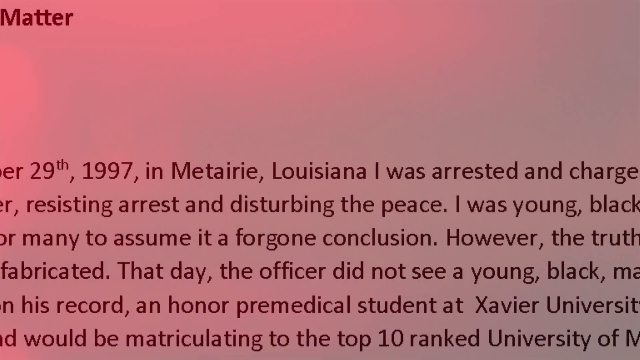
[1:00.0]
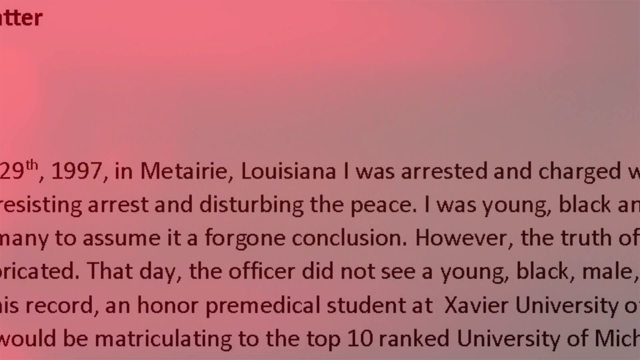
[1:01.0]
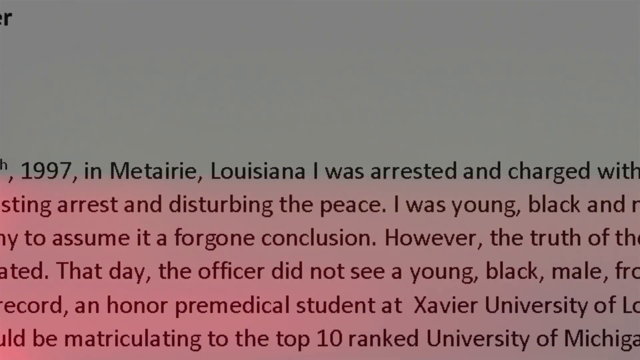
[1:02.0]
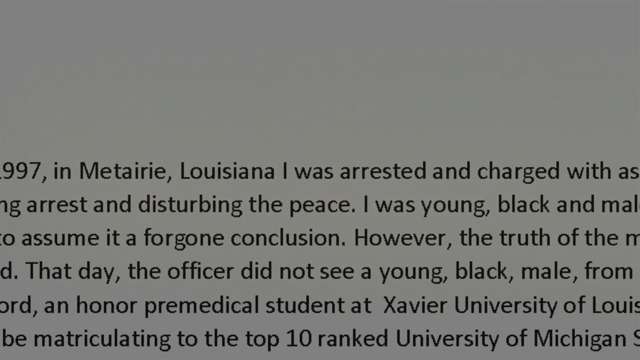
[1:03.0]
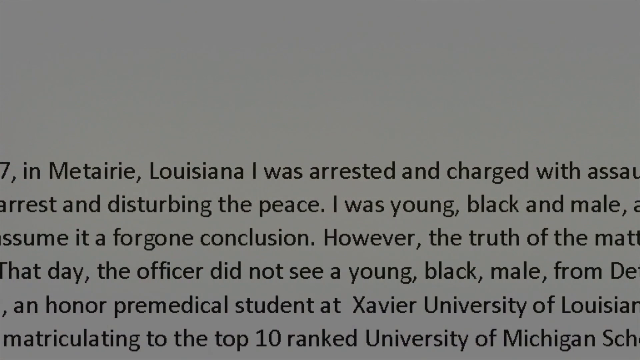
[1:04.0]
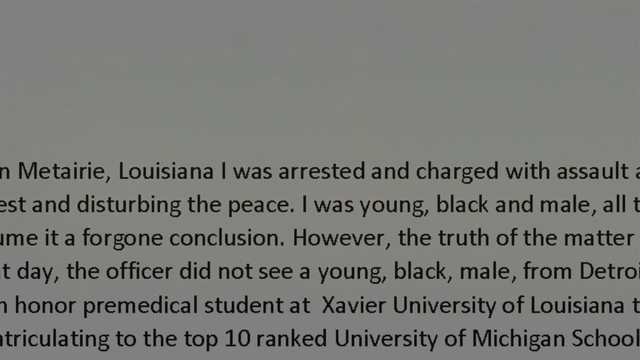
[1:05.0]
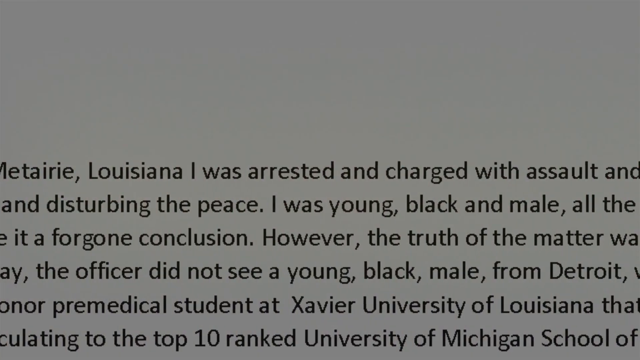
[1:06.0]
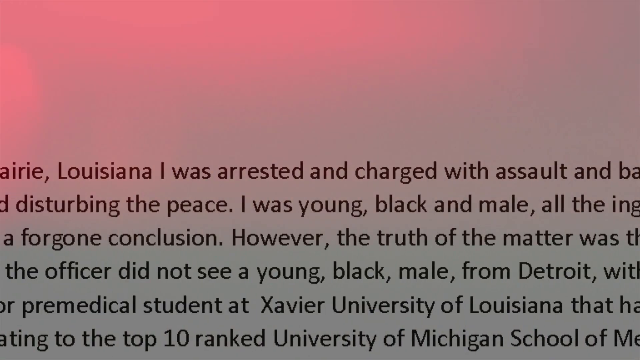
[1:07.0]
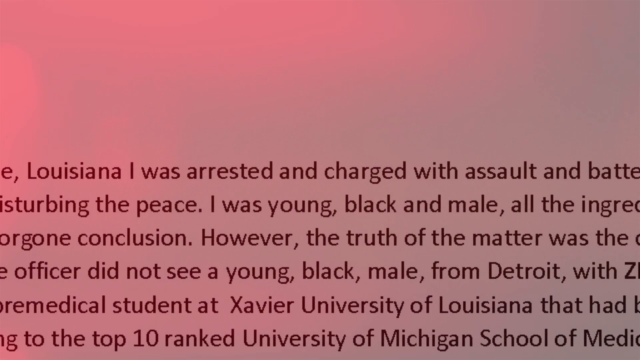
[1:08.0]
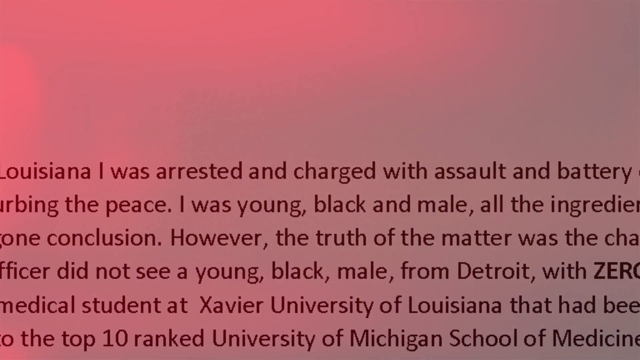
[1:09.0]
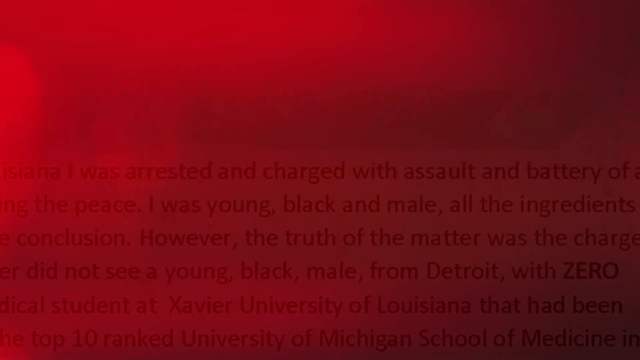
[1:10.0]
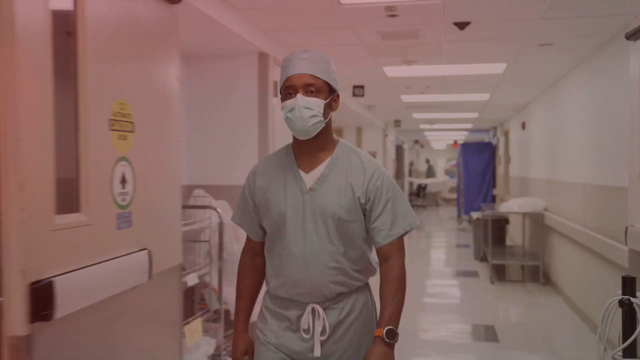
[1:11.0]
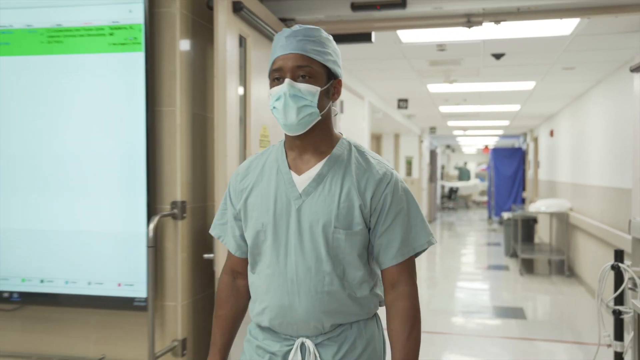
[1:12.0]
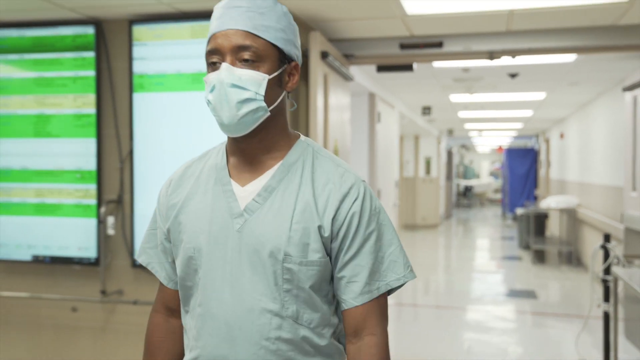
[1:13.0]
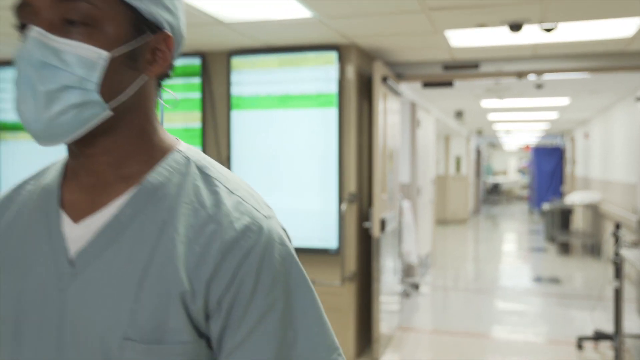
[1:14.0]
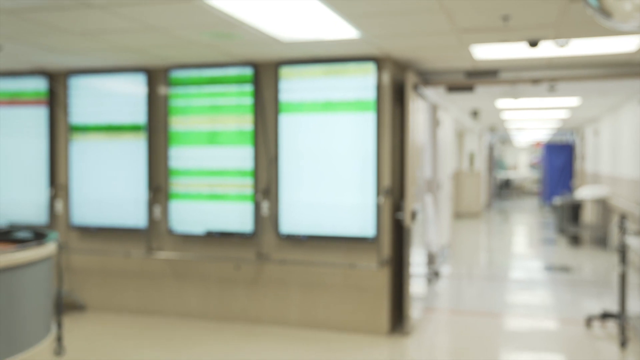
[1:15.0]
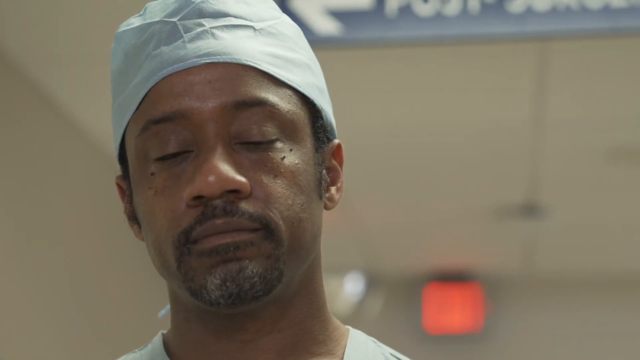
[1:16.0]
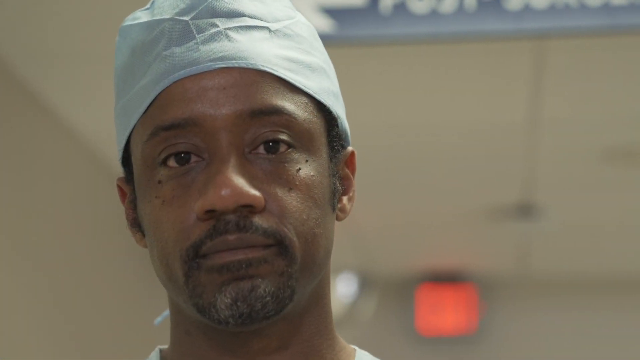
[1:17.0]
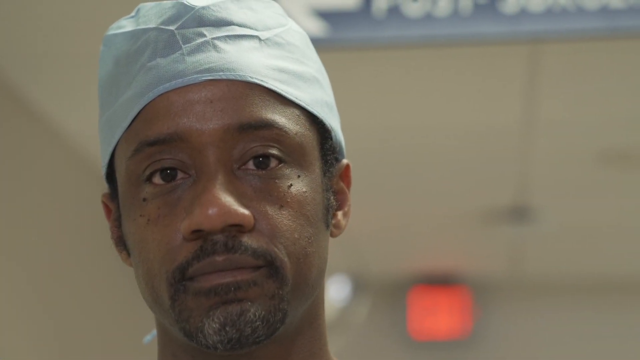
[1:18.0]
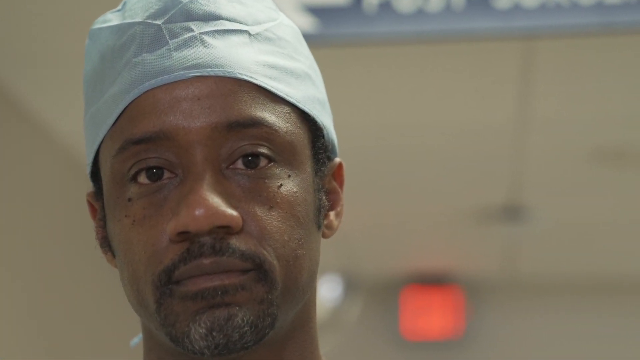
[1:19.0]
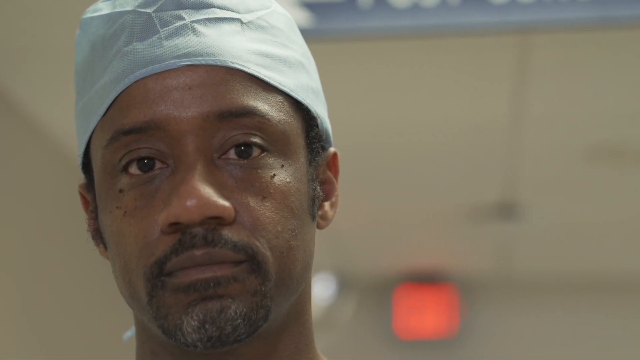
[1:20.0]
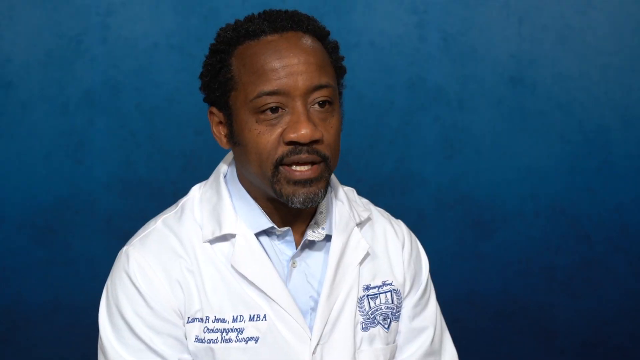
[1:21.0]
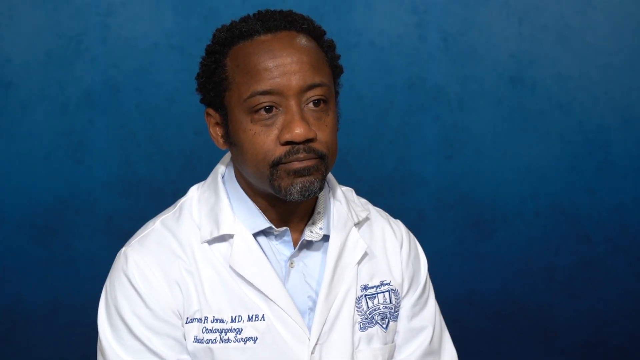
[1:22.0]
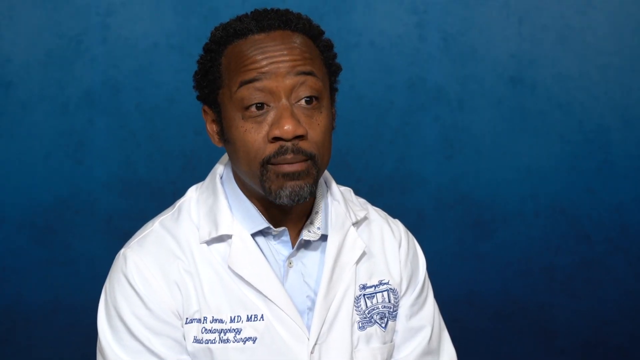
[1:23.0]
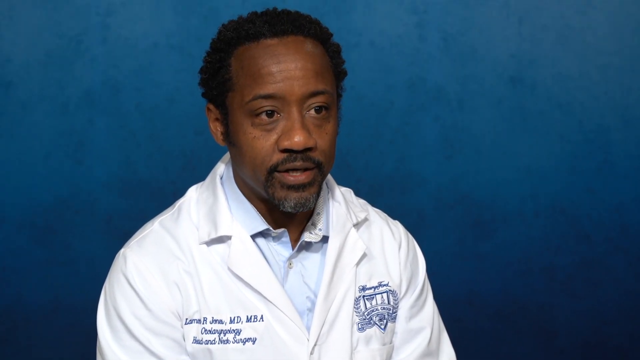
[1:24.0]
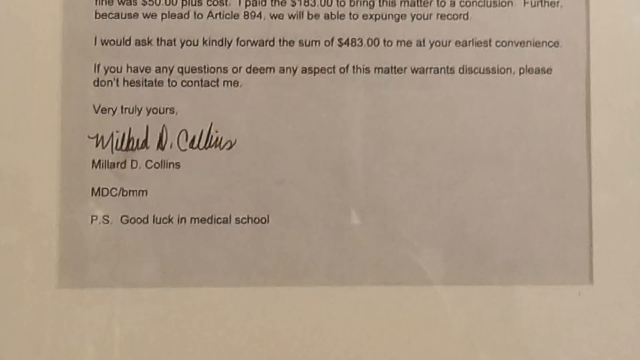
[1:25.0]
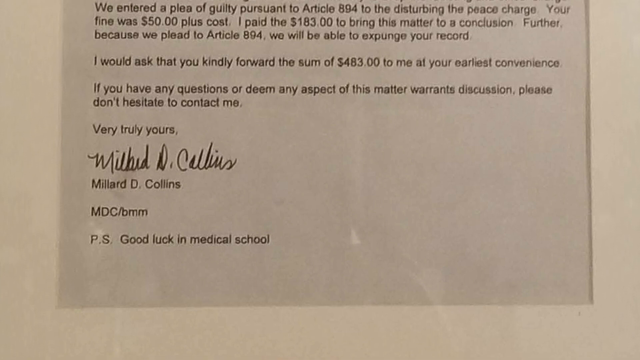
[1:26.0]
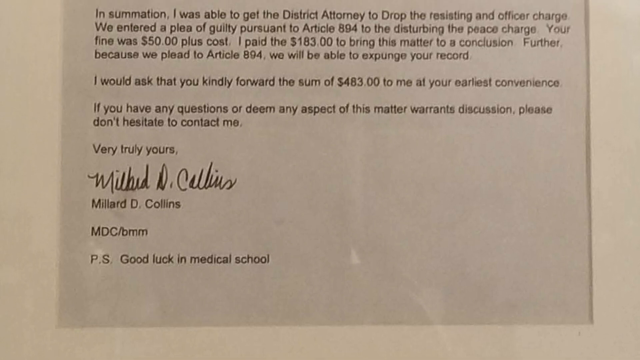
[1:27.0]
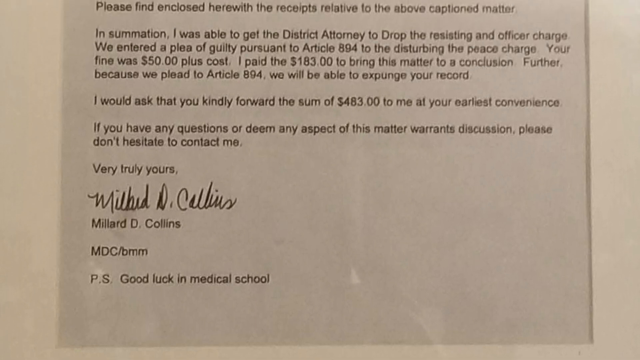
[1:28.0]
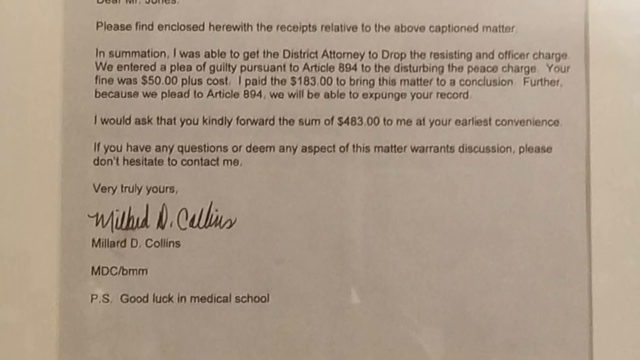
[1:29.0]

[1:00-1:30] A close-up shows what looks like an article. The text on screen has someone referring to a time they were arrested in 1997 in Metairie, Louisiana. As the camera pans over the text, blue and red lights flash on the screen like police lights. In places the text says that the person arrested was young, Black, and male. As the text fades, a blue police light briefly flashes. A video then shows a Black man in surgical scrubs and a surgical mask walking down a hospital hallway; he walks out of frame. A close-up follows of the same man, wearing the blue cap he had on earlier but without a mask. He looks straight ahead in what looks like an operating room or a room at the hospital. He has a closely cropped mustache. The scene switches to the same man sitting in front of a blue backdrop, speaking to someone off camera. He wears a doctor's white coat with the name "Lamont Jones" stitched on the front.